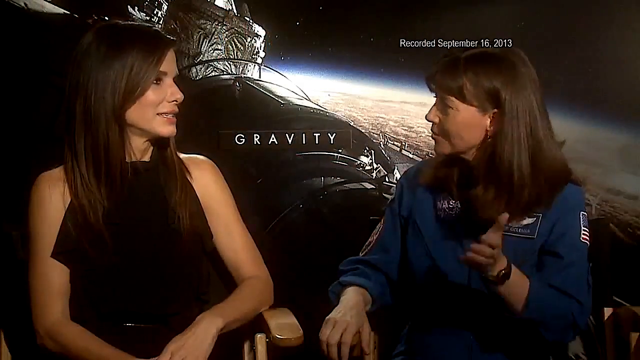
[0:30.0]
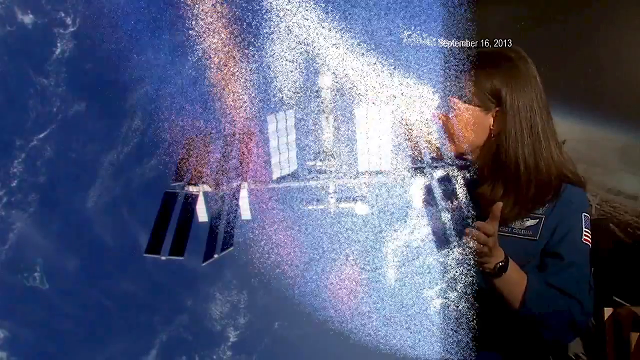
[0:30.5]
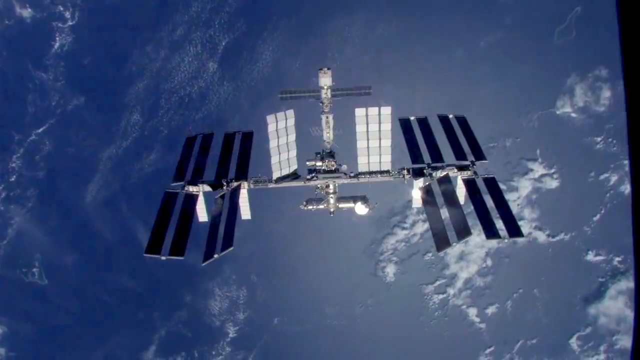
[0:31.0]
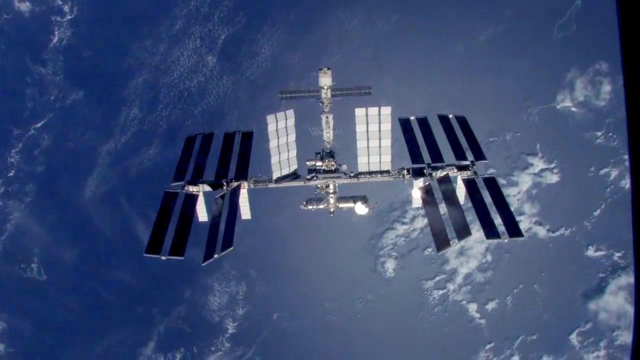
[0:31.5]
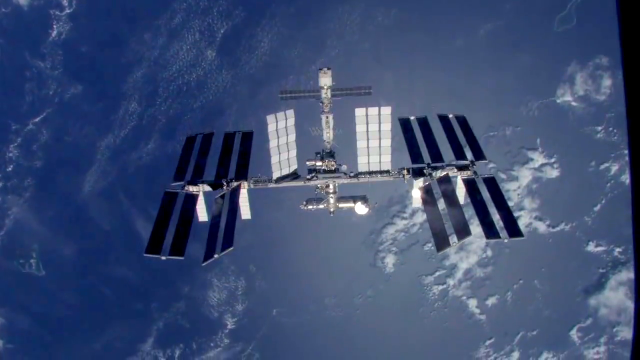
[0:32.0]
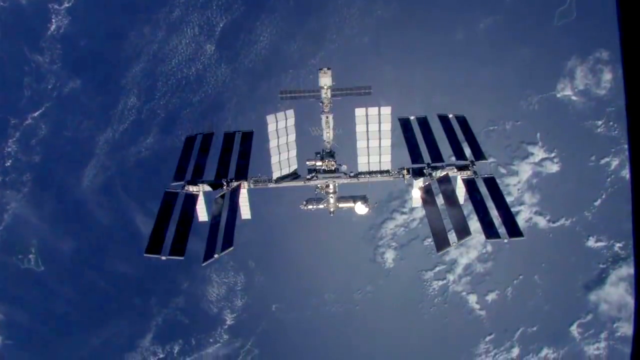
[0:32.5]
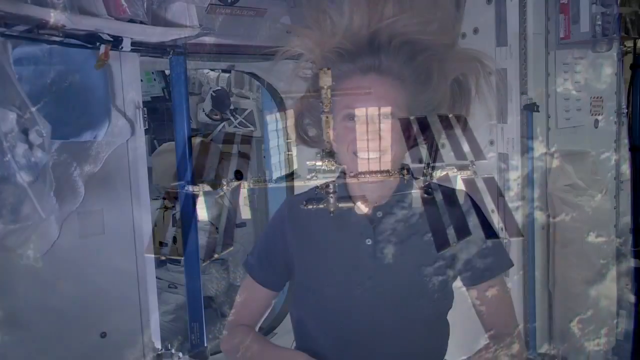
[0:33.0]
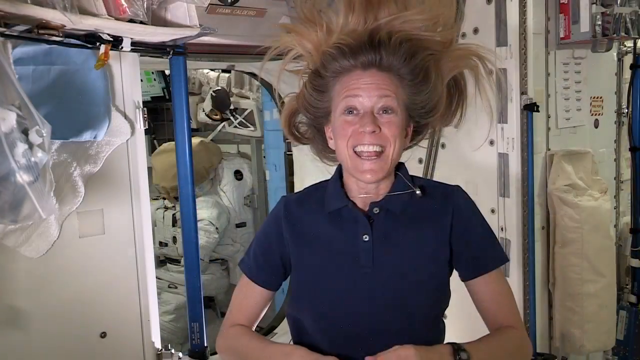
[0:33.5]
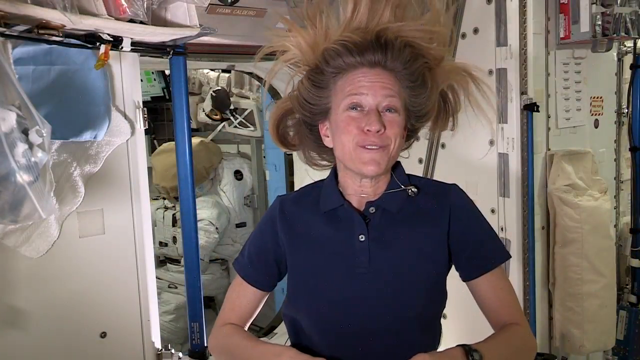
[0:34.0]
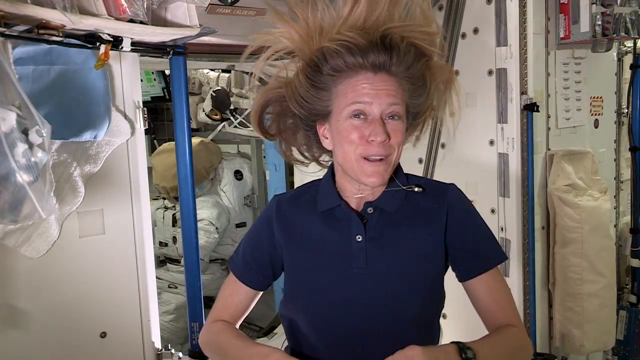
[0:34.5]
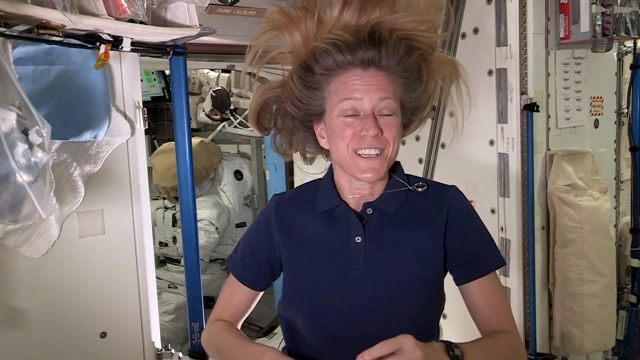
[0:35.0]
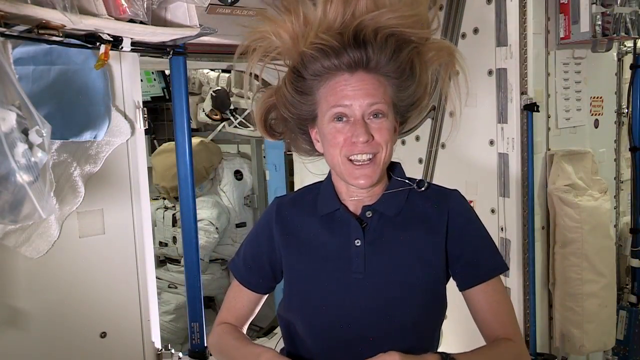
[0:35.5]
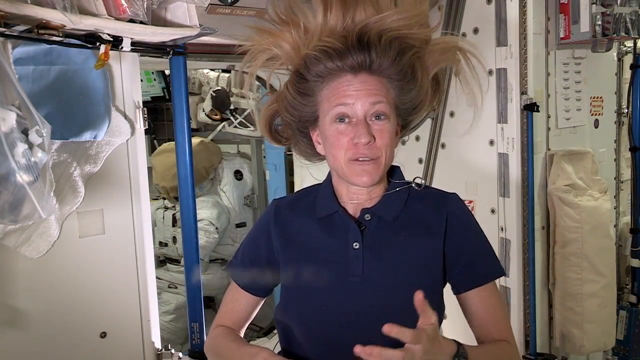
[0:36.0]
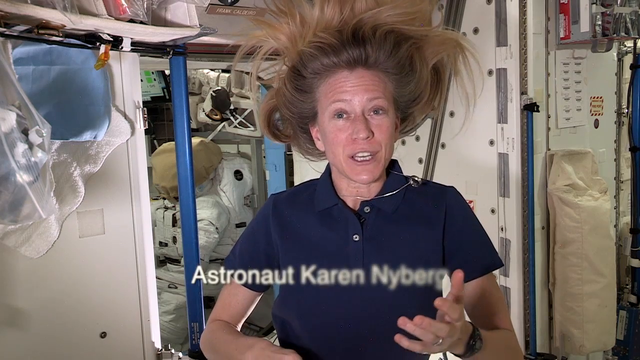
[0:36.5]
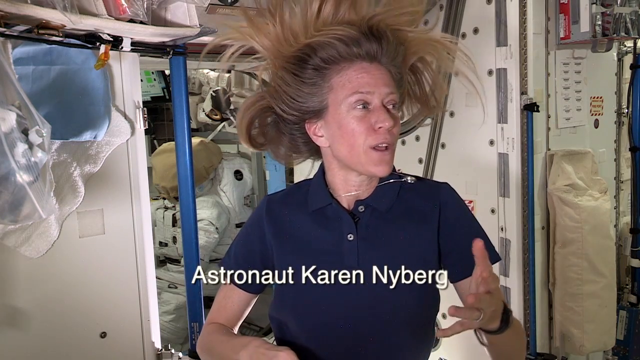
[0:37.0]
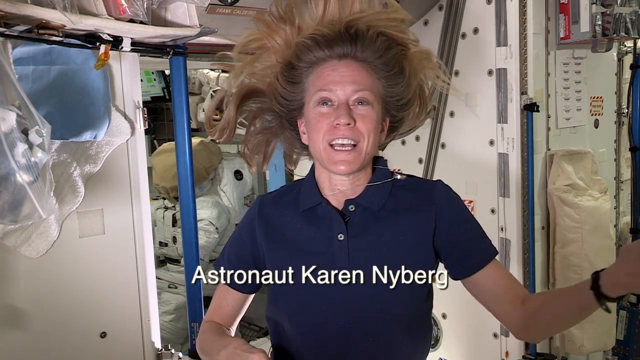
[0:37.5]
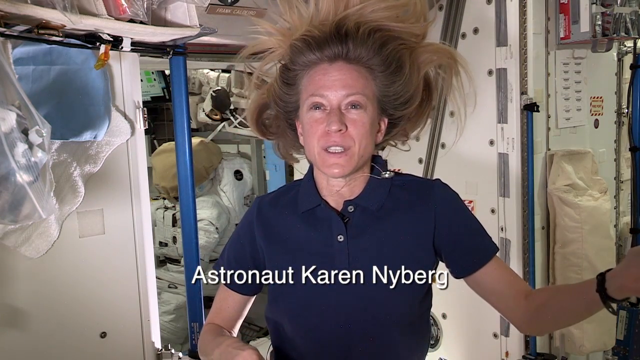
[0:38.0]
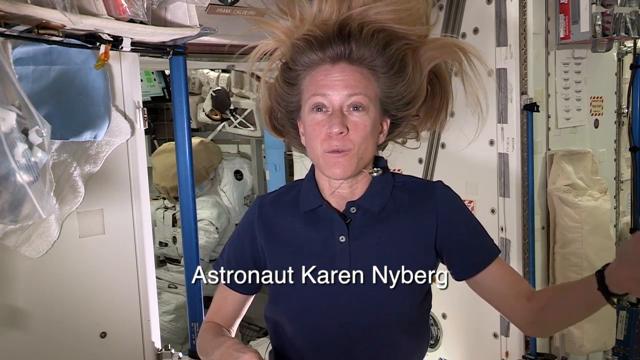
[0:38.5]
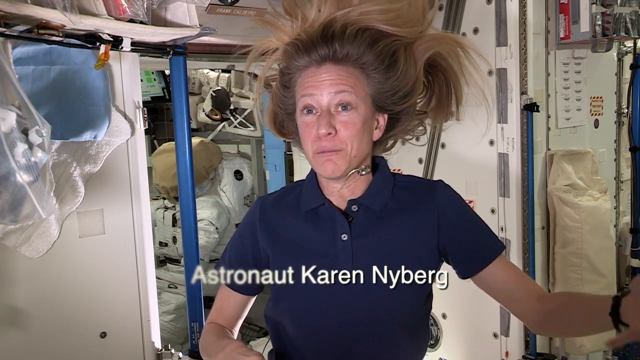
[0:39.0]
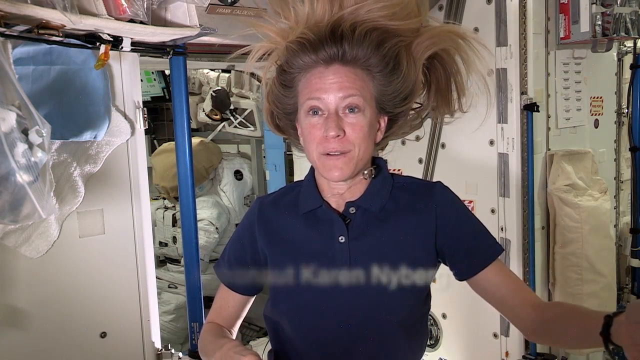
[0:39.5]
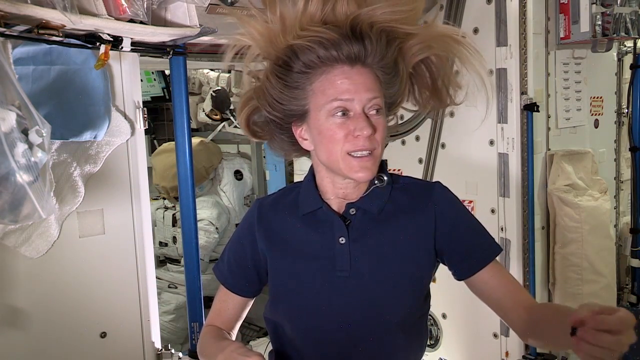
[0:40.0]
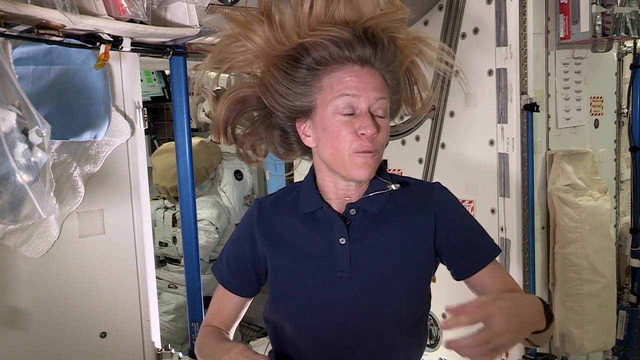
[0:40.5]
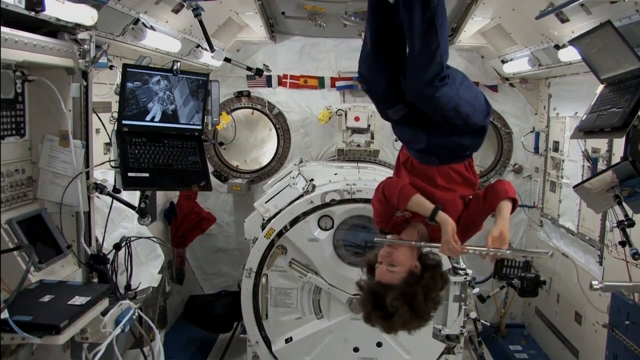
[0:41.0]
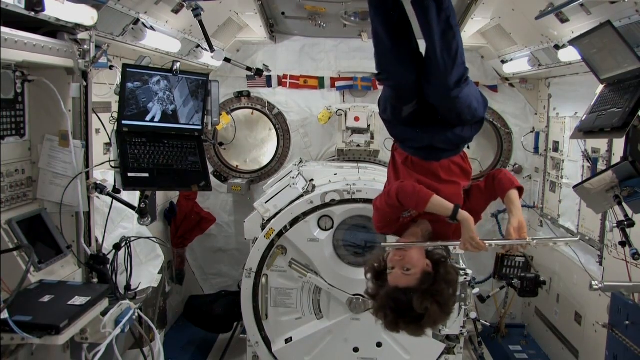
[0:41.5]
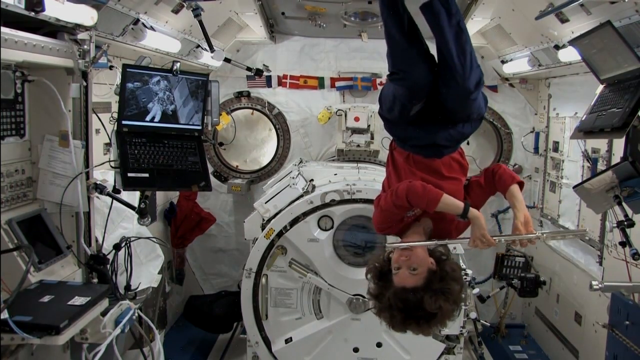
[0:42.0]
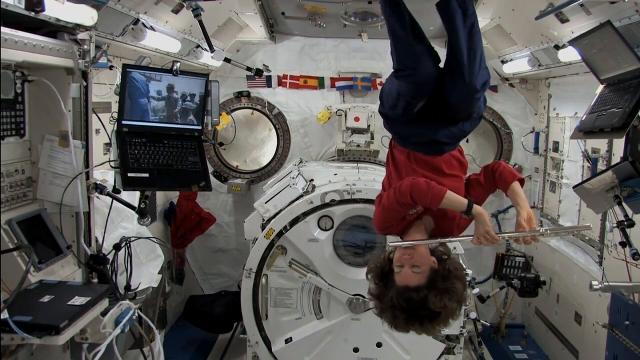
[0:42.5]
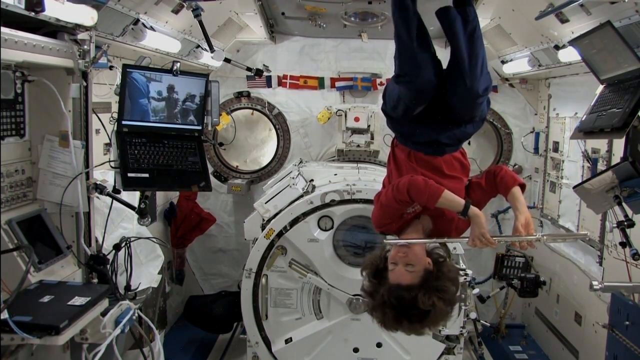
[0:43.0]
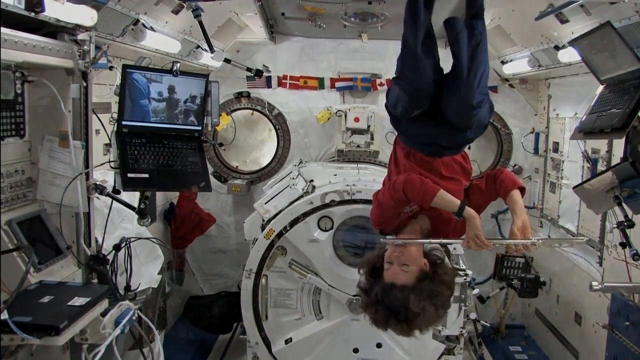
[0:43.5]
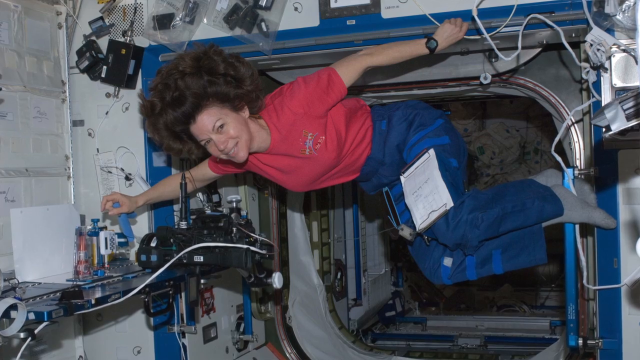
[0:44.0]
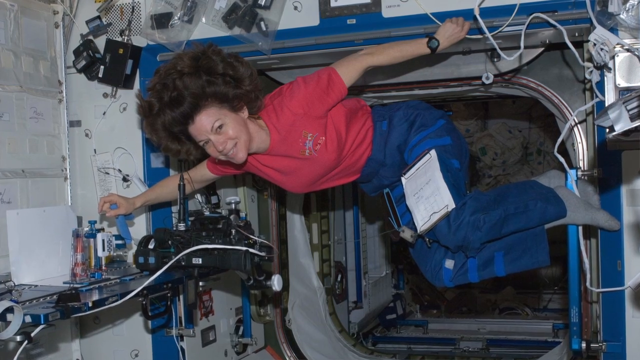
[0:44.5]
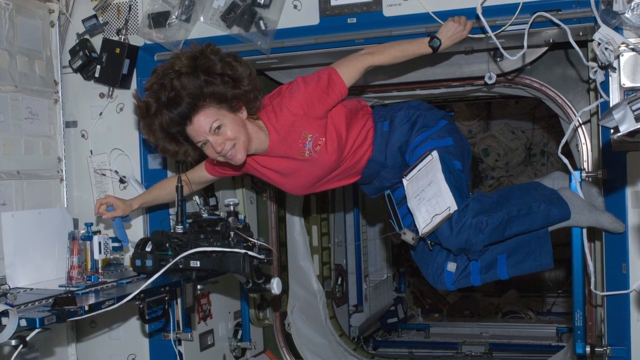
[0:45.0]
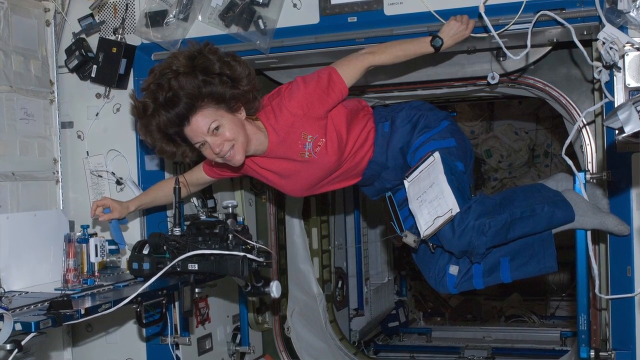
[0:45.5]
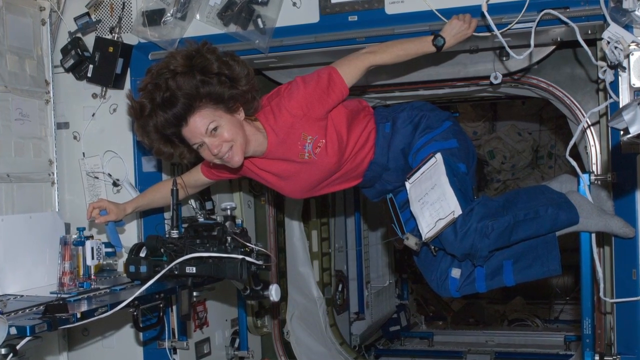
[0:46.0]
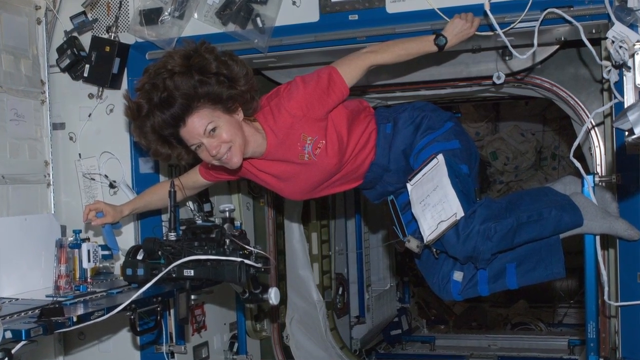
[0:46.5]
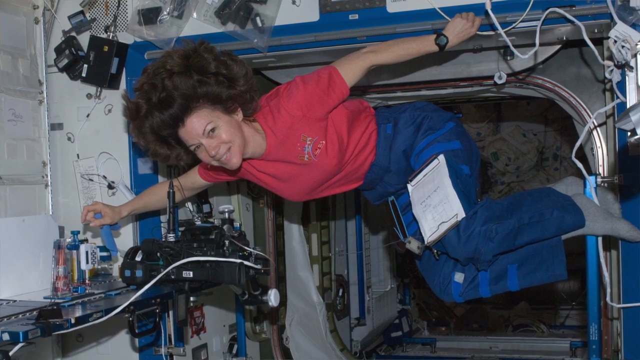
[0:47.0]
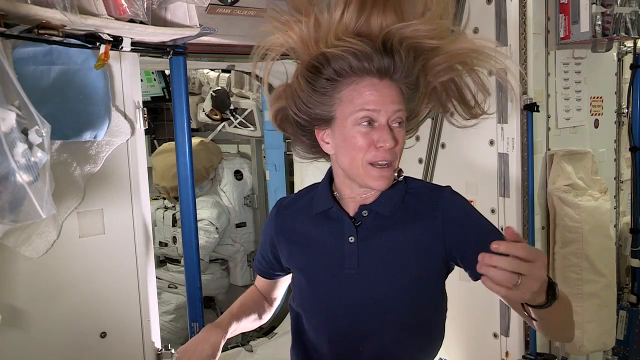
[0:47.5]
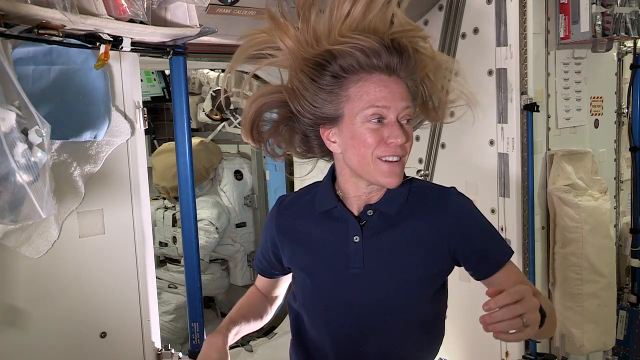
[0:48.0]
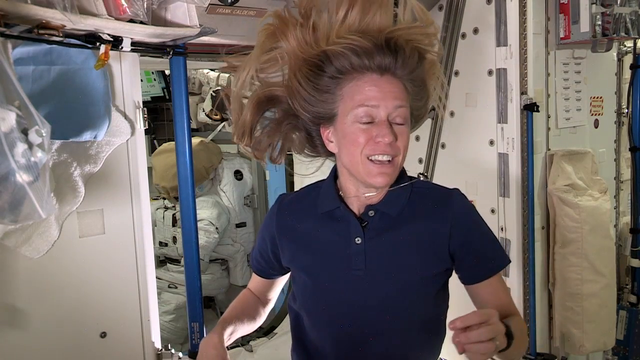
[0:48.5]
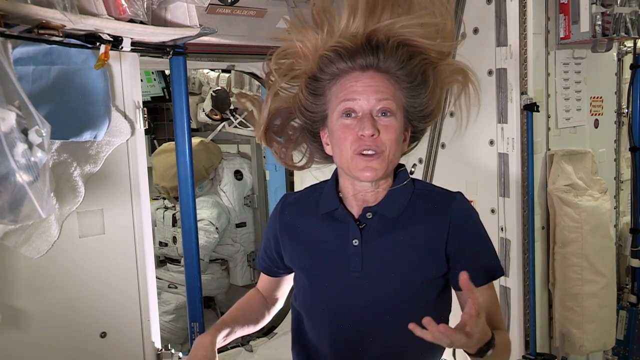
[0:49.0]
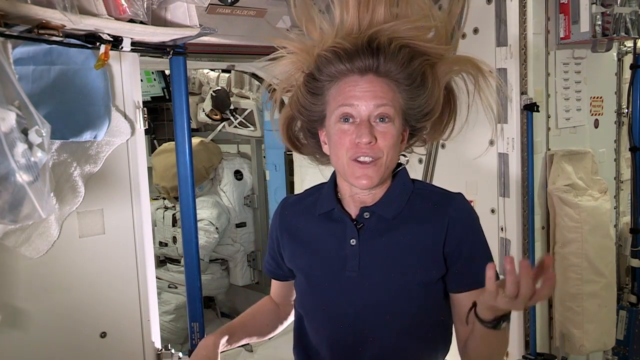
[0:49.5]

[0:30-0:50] Sandra Bullock is on the left looking right at the astronaut, and the astronaut is on the right looking left at Bullock. The astronaut's hand is out in front of her, palm toward Bullock and fingers toward the camera, as she talks. A swipe across to the right leads back to the satellite circling the Earth, slowly moving down. The video then cuts to a blonde-haired woman in a space station, her hair up above her from zero gravity and her necklace floating off to the right. She wears a blue polo shirt and has her arms down at her sides. She brings one hand up in front of the camera, fingers toward the camera, as her name comes across: "astronaut Karen Nyberg." She looks to the right as she talks and moves her right arm out to the right, her fingers going off the side of the frame, then looks back to the camera as she talks and brings her hand back, kind of out in front of her. Next, a woman in the space station is upside down playing a flute as she spins in a circle; she stops facing the camera. A still follows of her floating chest down, head up to the left and feet over to the right, hands extended holding onto the inside of the space shuttle, as the shot zooms toward her. The video cuts back to the blonde-haired woman looking off to the right; she then looks forward as her hand moves up by her face, fingers pointing upward.